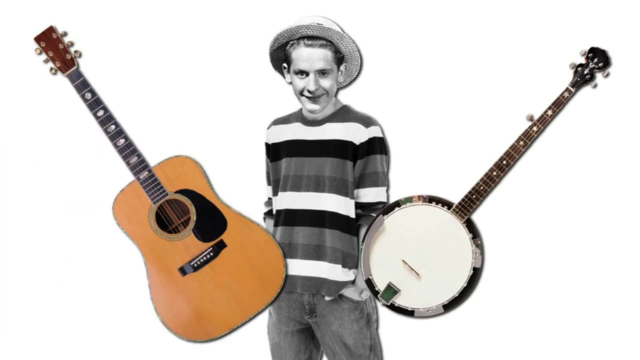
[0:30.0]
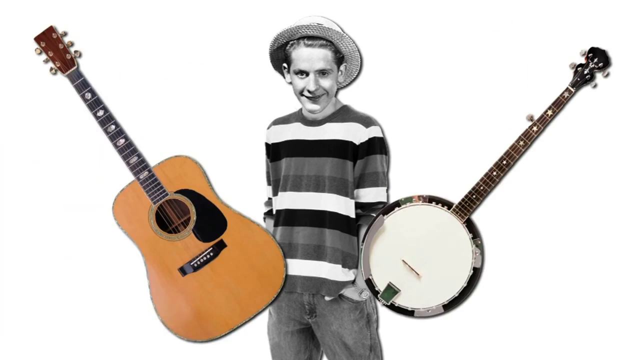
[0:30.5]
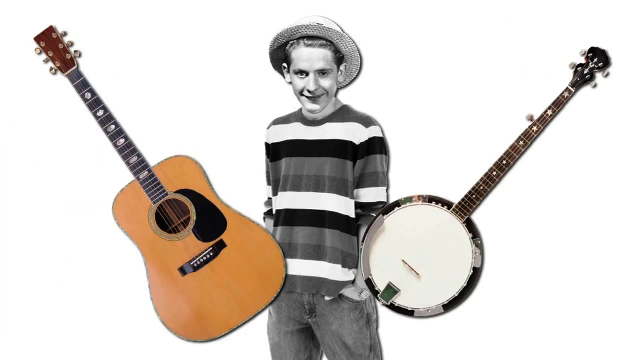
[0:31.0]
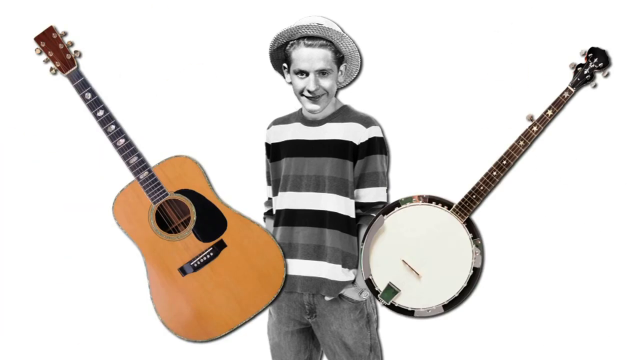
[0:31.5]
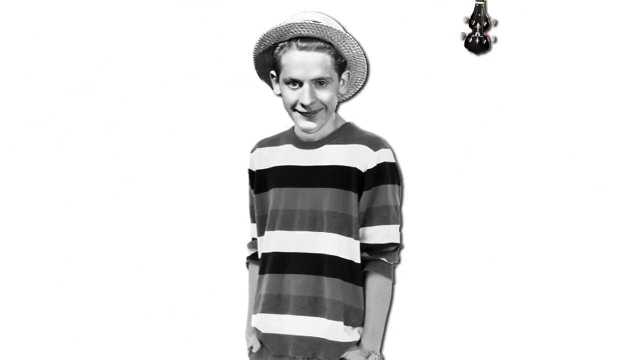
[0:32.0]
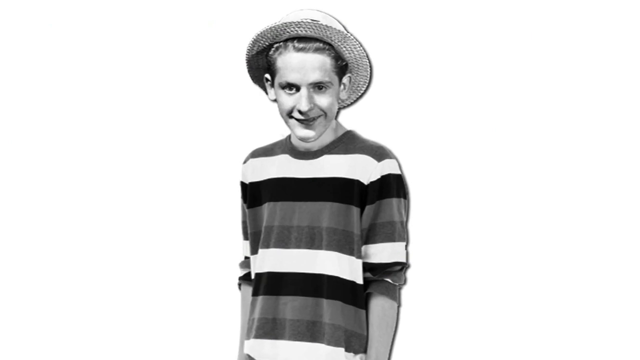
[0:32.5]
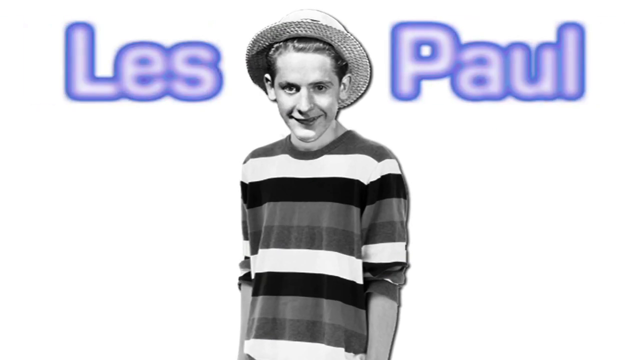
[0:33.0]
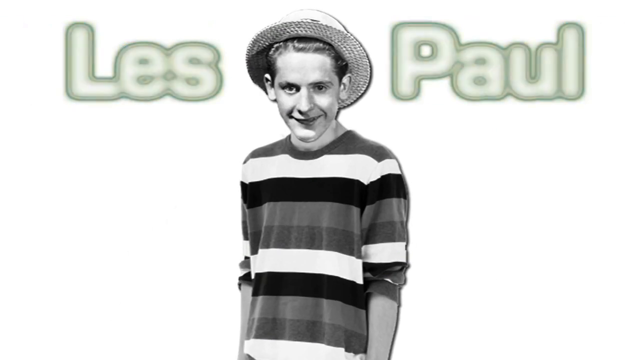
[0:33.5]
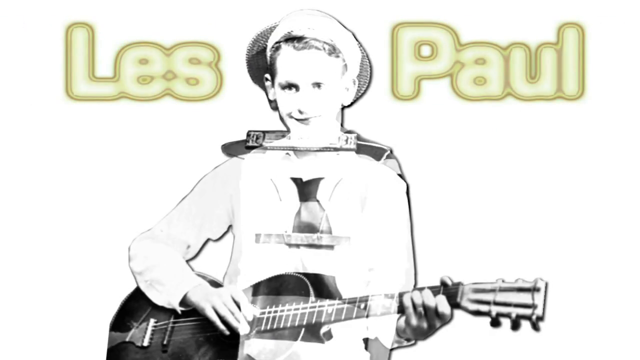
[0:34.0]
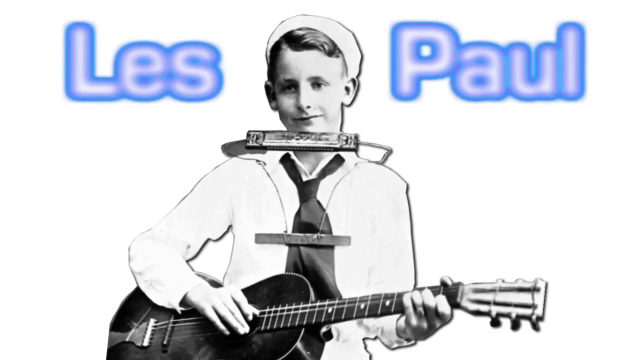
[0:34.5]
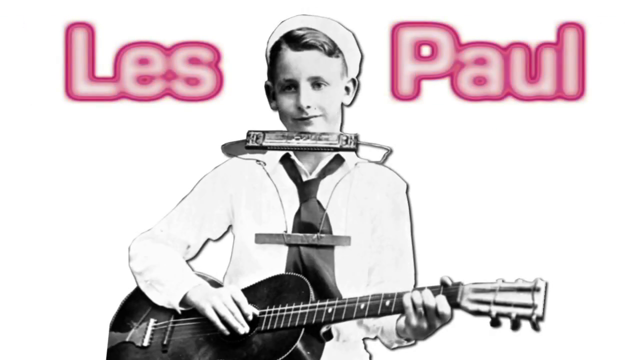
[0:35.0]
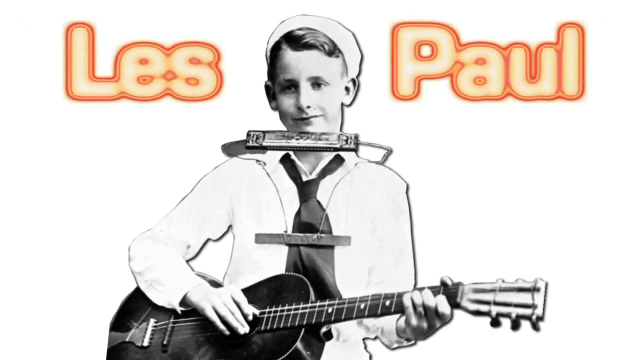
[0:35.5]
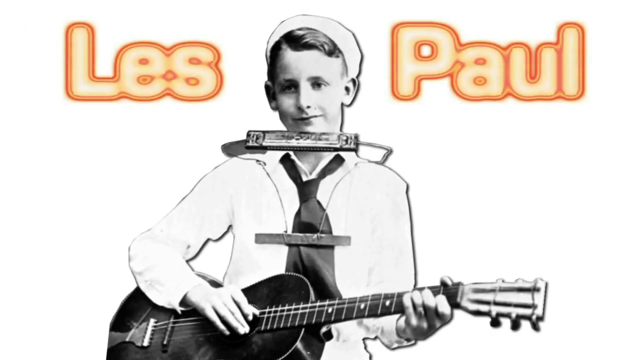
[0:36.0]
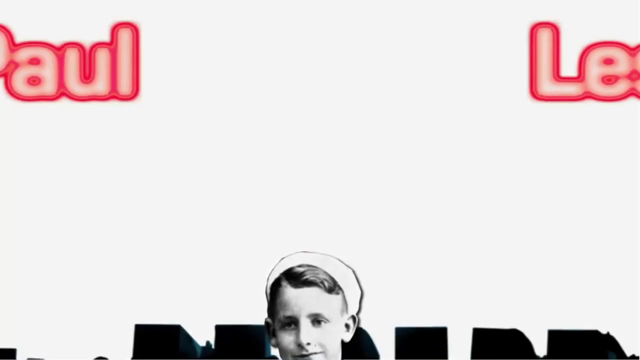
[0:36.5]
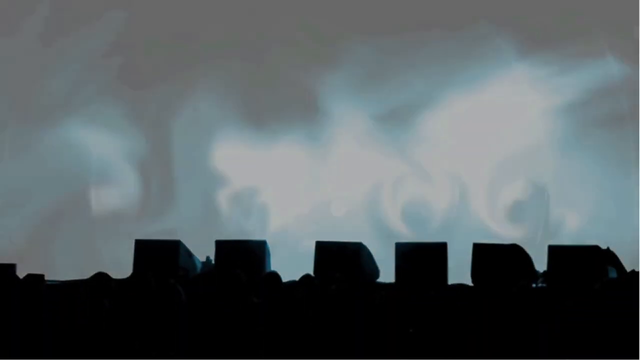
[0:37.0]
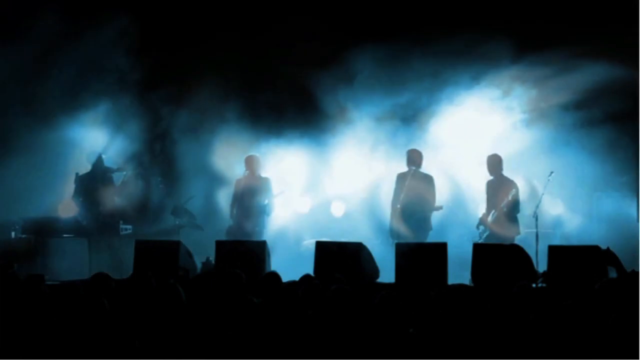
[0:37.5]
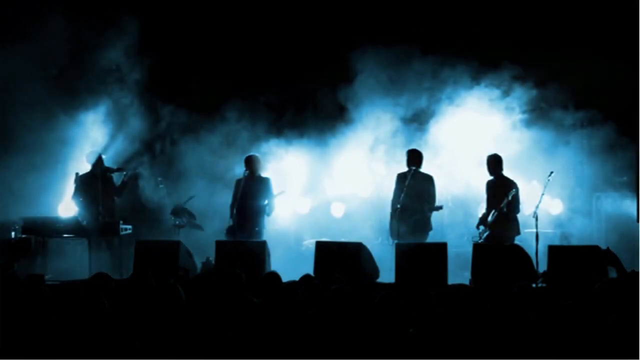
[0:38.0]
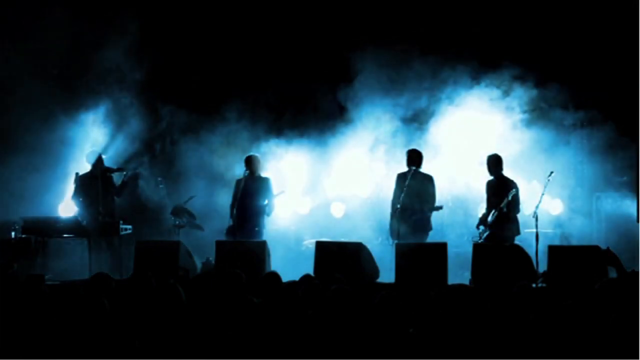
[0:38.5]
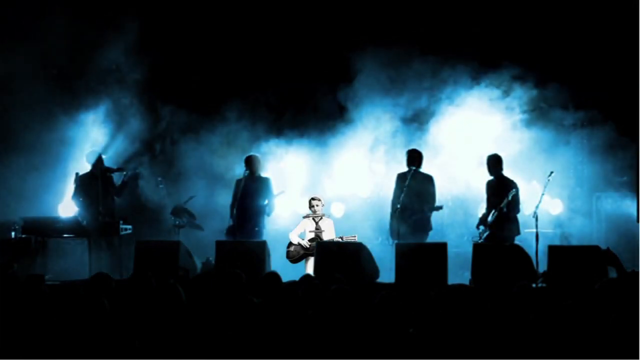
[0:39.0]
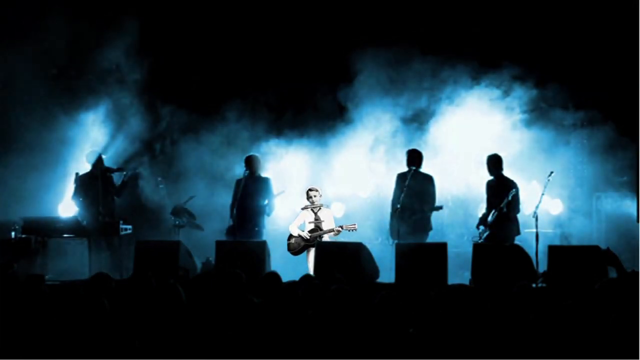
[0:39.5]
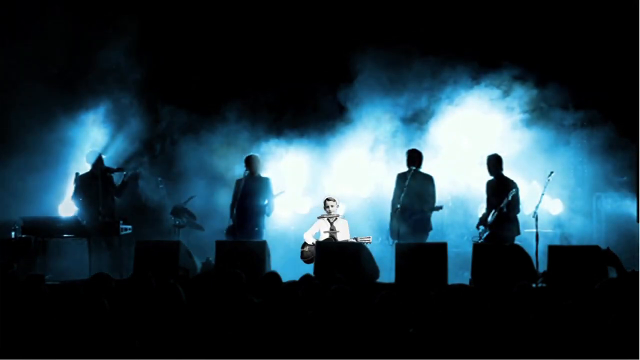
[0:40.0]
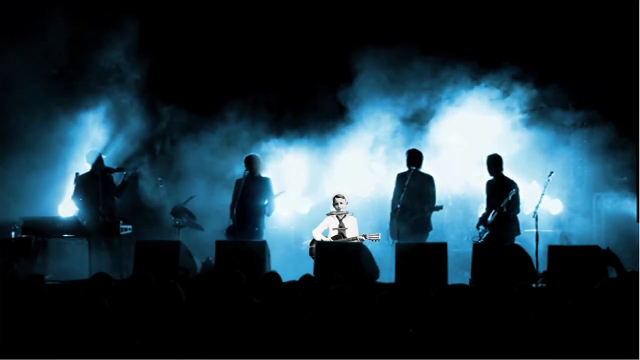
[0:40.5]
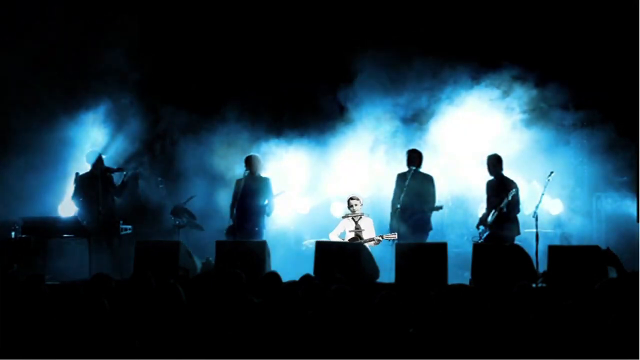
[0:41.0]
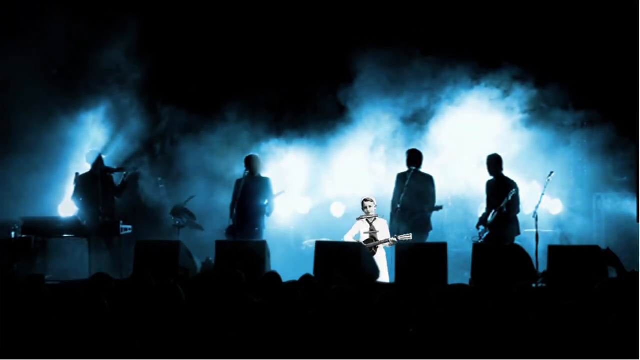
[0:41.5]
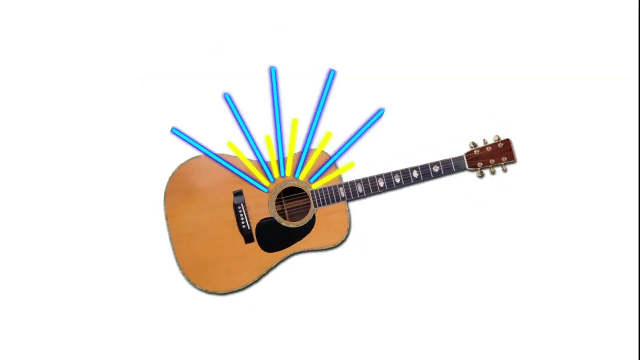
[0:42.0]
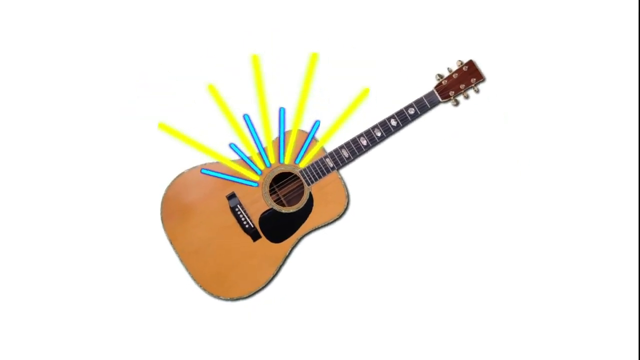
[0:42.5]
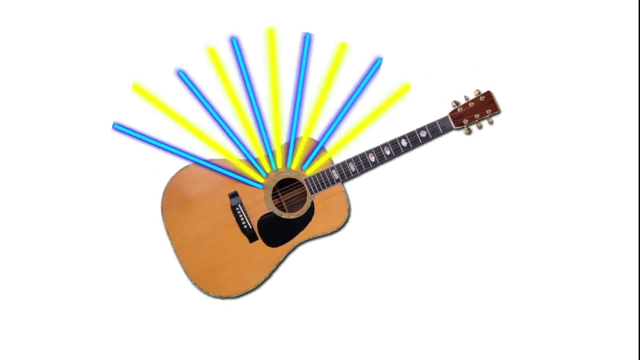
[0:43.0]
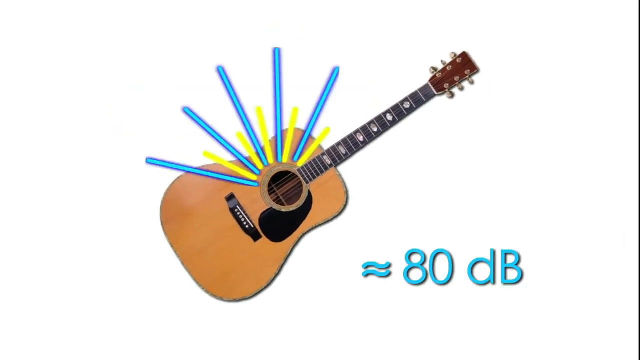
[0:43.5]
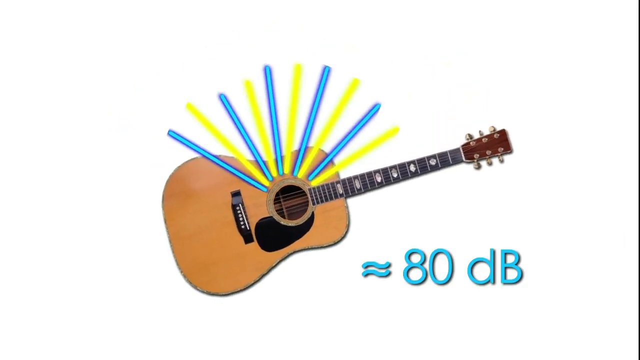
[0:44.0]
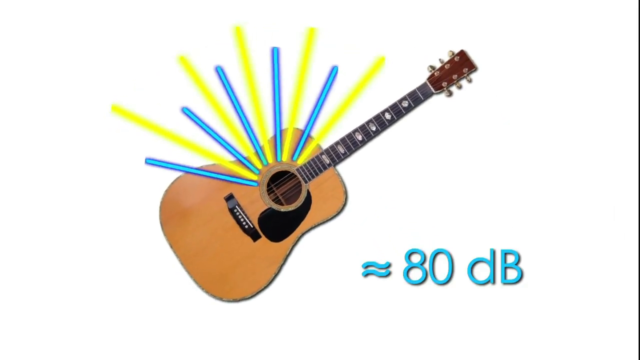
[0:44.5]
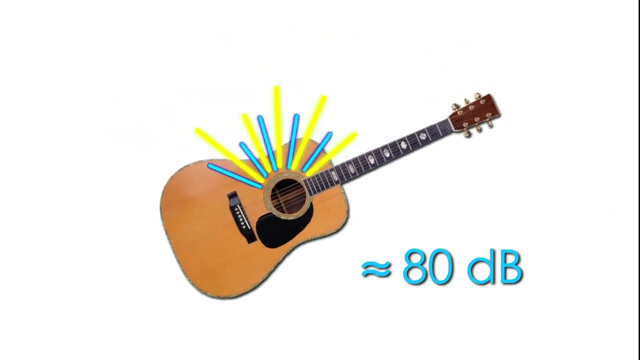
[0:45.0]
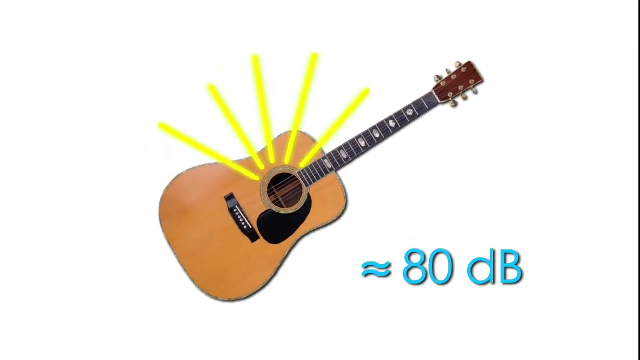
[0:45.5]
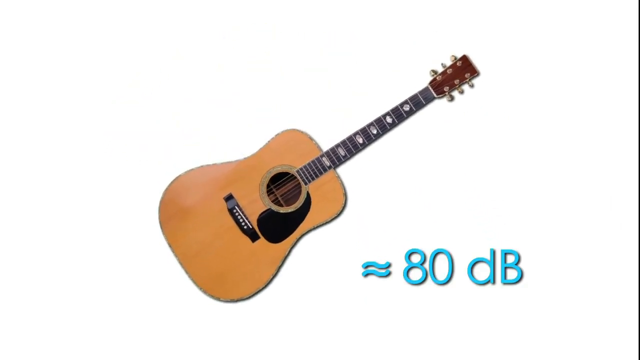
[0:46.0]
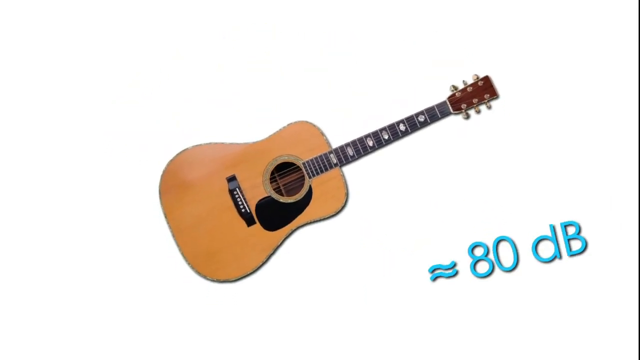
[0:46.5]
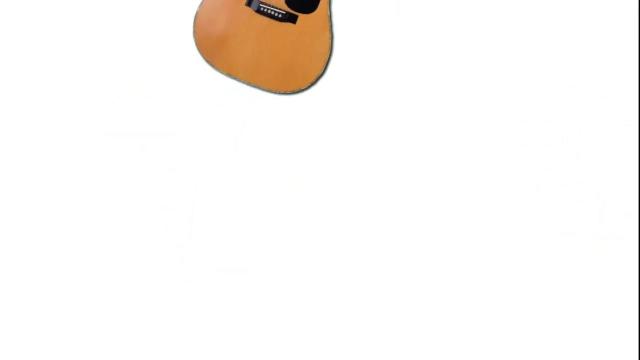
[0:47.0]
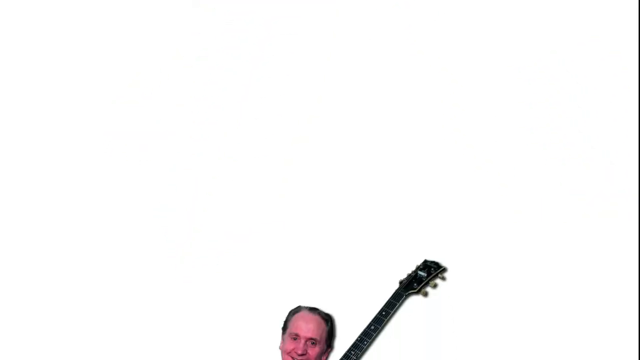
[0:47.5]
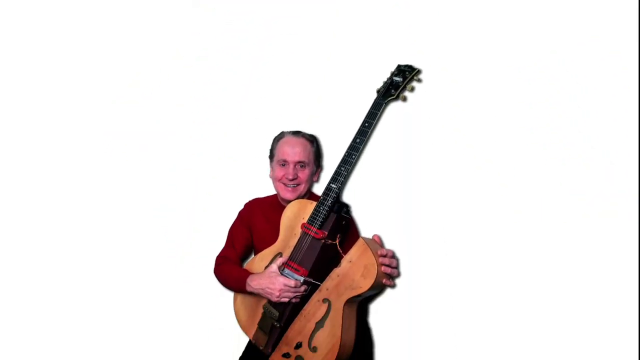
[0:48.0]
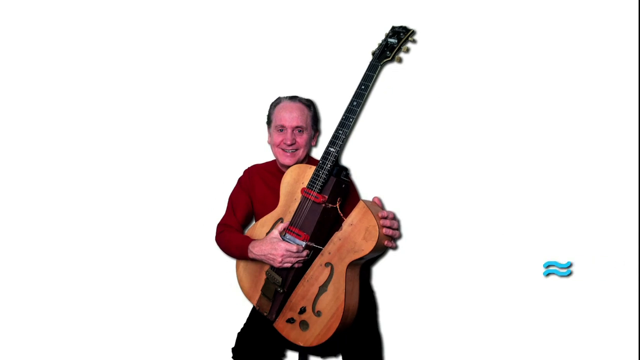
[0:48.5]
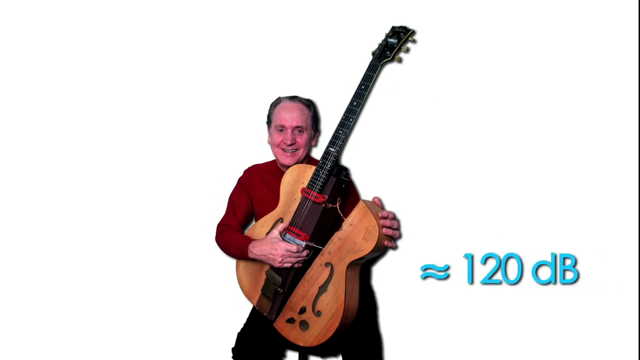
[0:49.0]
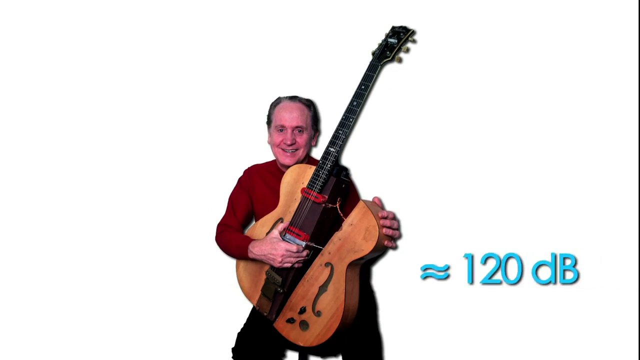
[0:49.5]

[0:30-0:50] The same man's face now appears on an adolescent's body, and the words "Les Paul" appear in bold next to his head, with "Les" on the left and "Paul" on the right. In the next scene he is dressed up with a harmonica hanging off his shoulder for him to play while he holds a guitar in his hands, and he wears a white cap. The words "Les Paul" are highlighted in neon and change colors, then slide off the screen in the opposite direction from the one they came in from. The scene transitions to four figures playing at a smoky concert, and the image of the boy appears in the middle, still with the harmonica around his neck and the guitar in his hands. He bounces around the middle of the screen. Then a guitar appears in the middle of the screen on a white background, with yellow stripes and smaller blue stripes coming off the middle where the sound comes out, as the guitar pivots on its middle. Text reading "close to 80 decibels" appears at the bottom right of the screen.